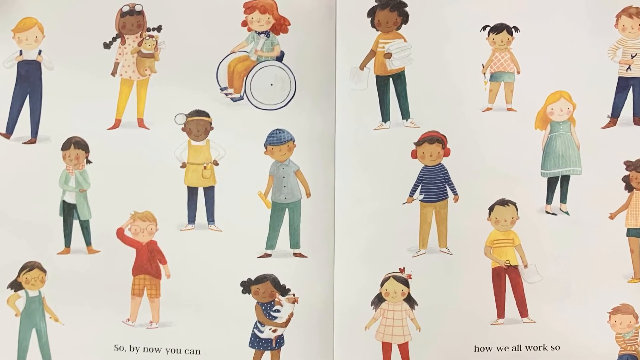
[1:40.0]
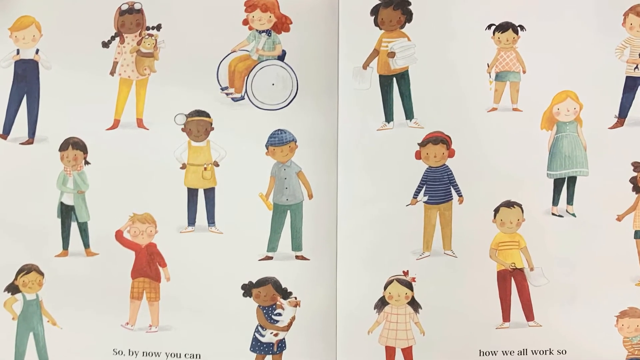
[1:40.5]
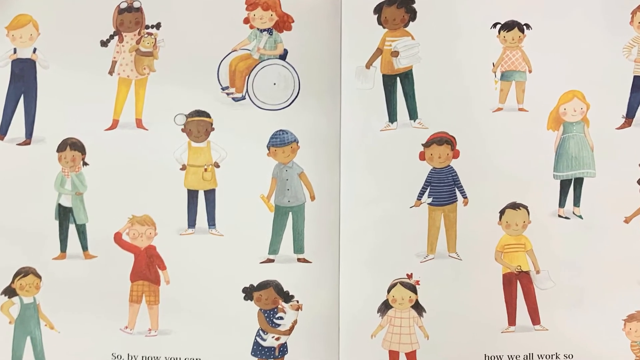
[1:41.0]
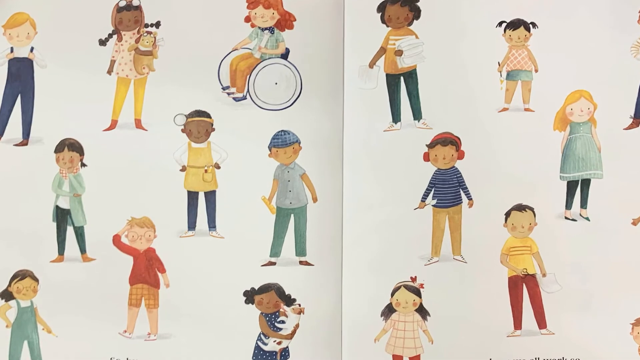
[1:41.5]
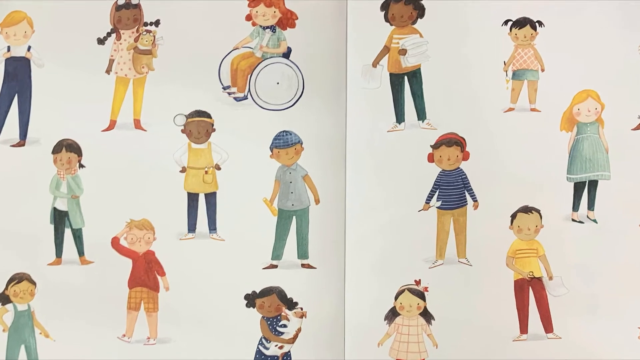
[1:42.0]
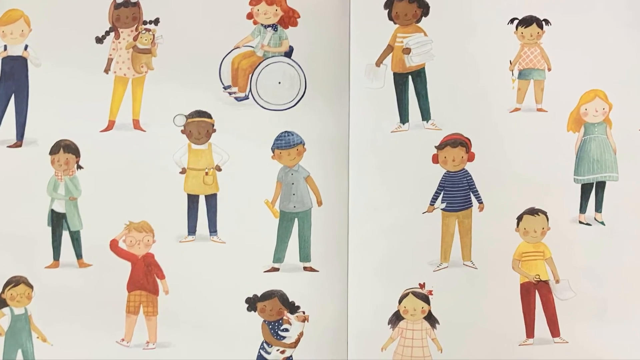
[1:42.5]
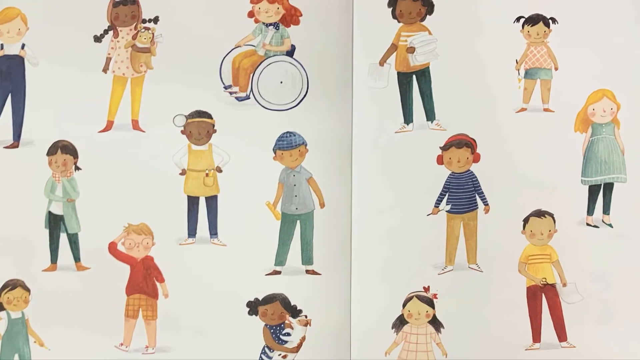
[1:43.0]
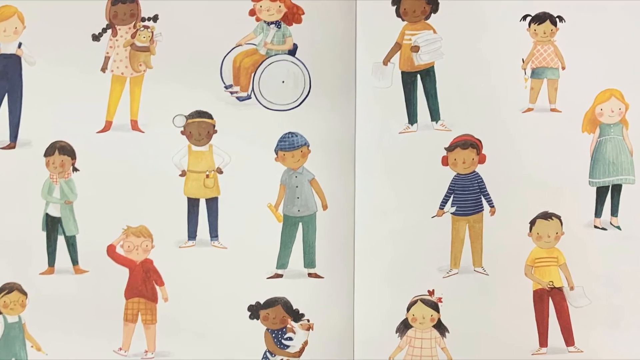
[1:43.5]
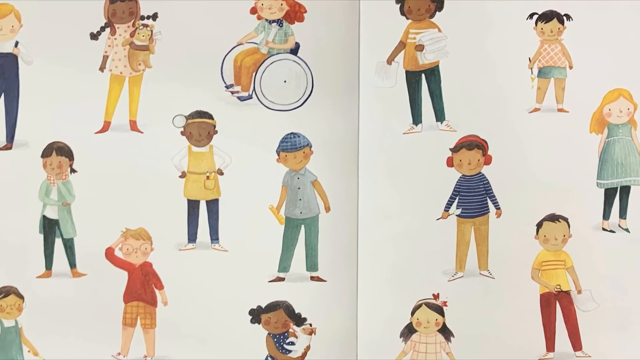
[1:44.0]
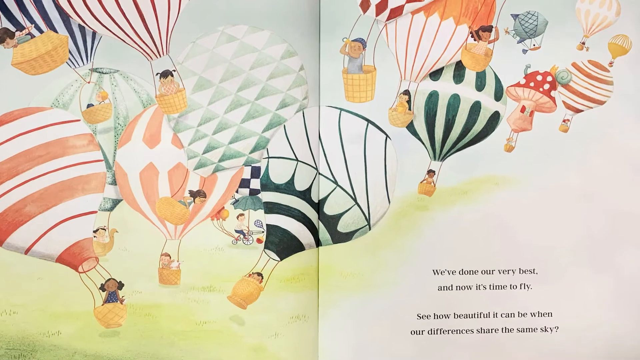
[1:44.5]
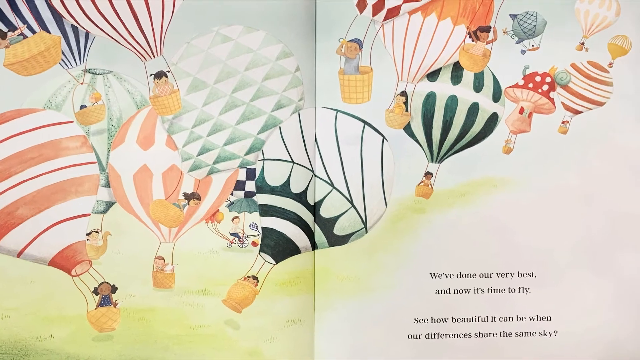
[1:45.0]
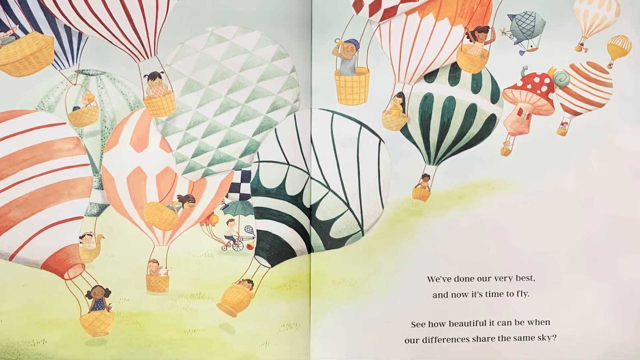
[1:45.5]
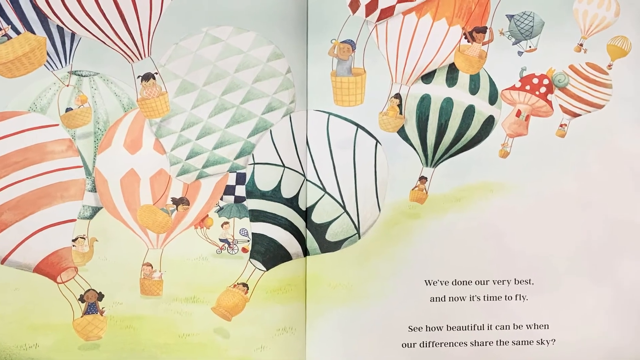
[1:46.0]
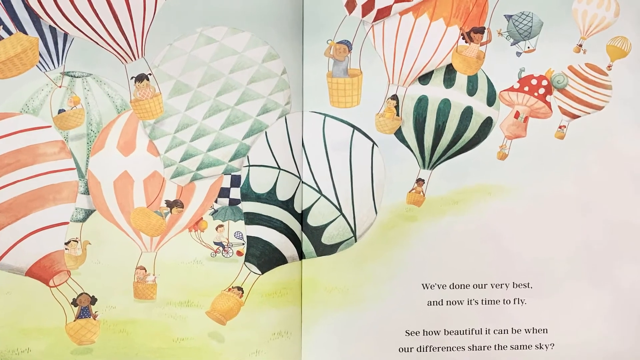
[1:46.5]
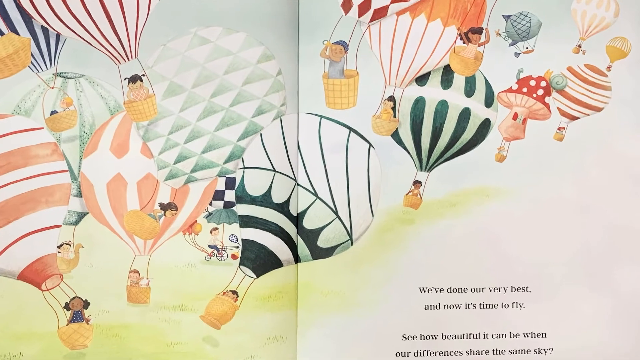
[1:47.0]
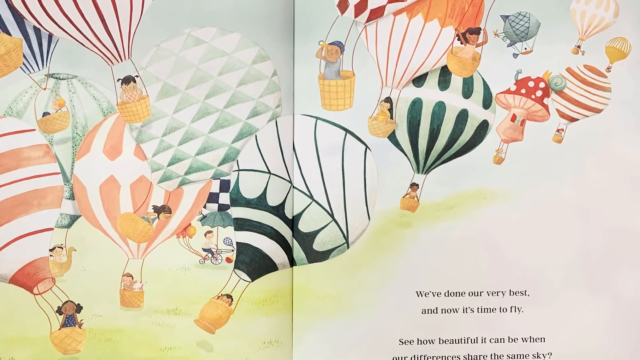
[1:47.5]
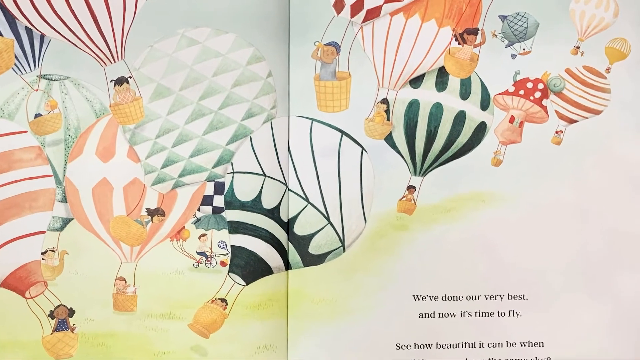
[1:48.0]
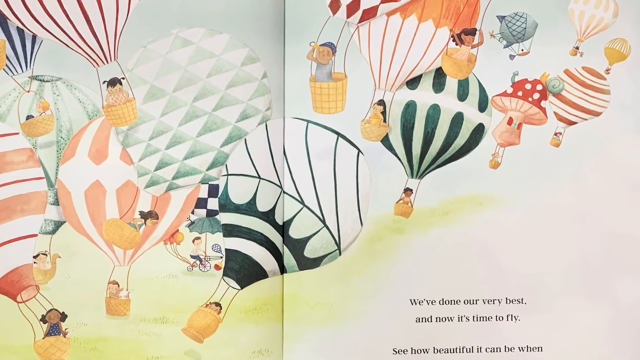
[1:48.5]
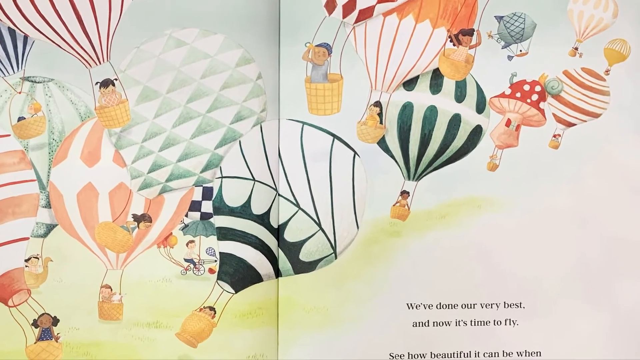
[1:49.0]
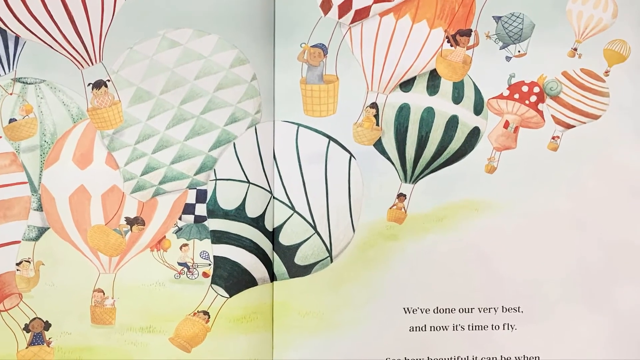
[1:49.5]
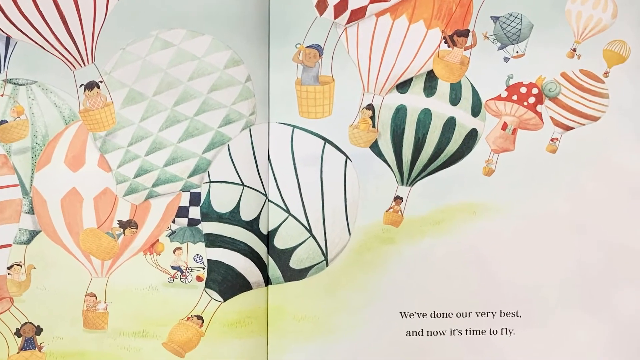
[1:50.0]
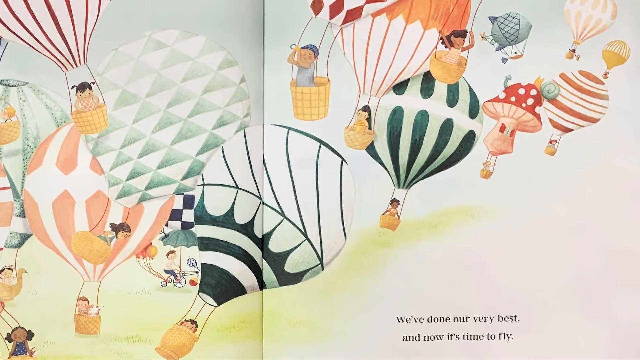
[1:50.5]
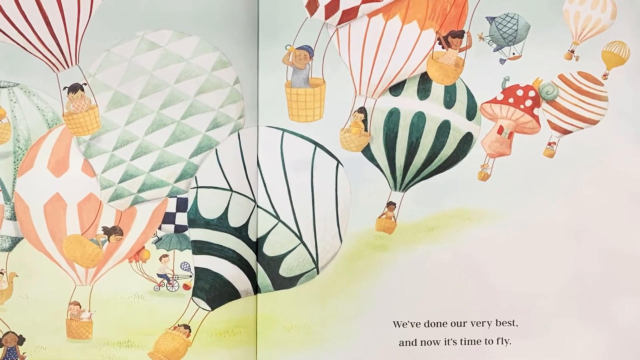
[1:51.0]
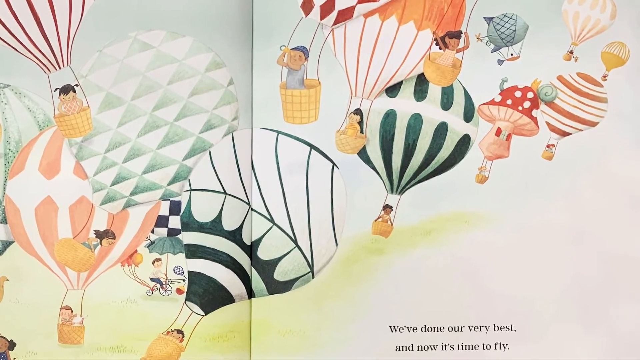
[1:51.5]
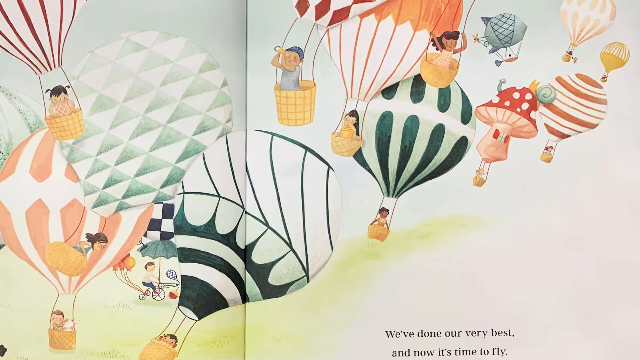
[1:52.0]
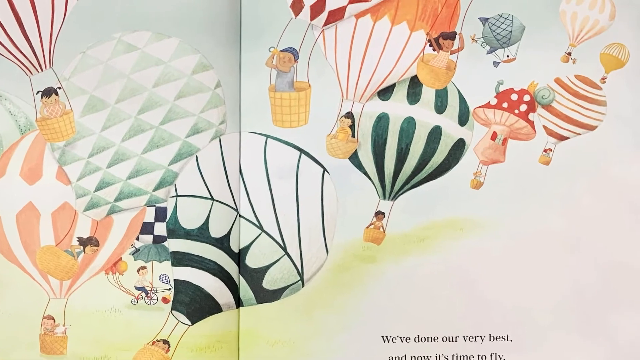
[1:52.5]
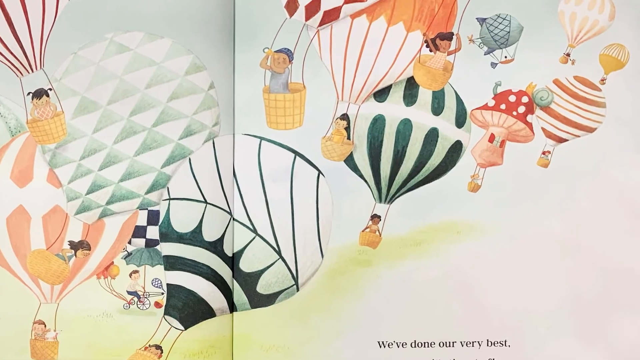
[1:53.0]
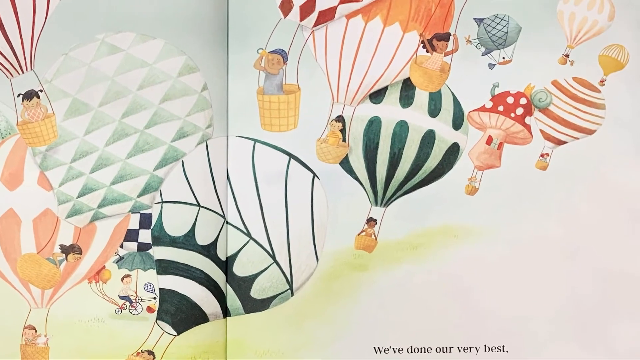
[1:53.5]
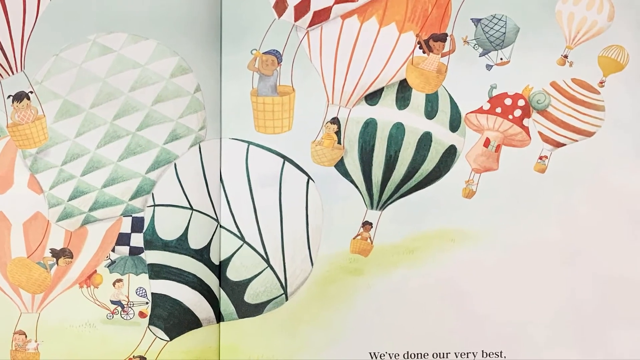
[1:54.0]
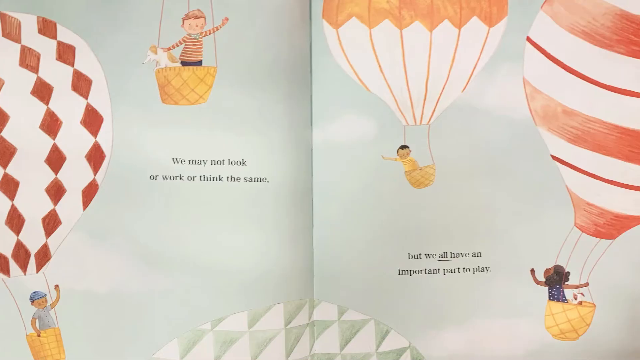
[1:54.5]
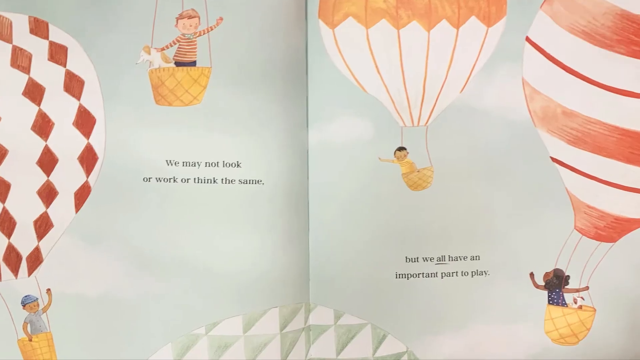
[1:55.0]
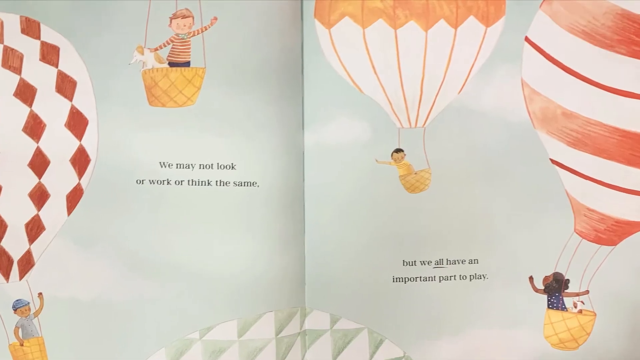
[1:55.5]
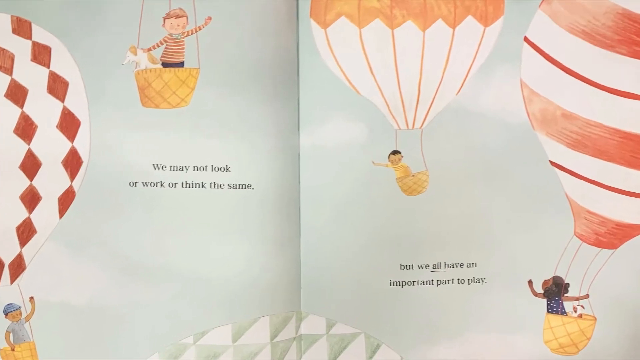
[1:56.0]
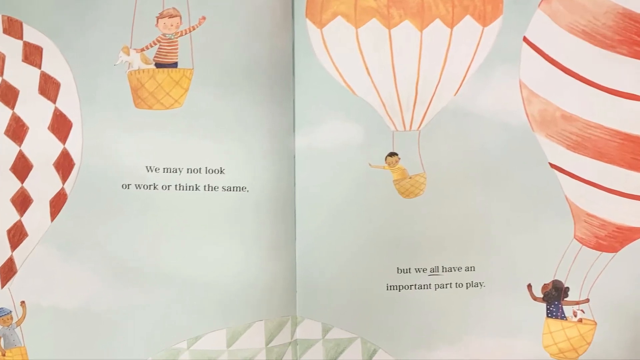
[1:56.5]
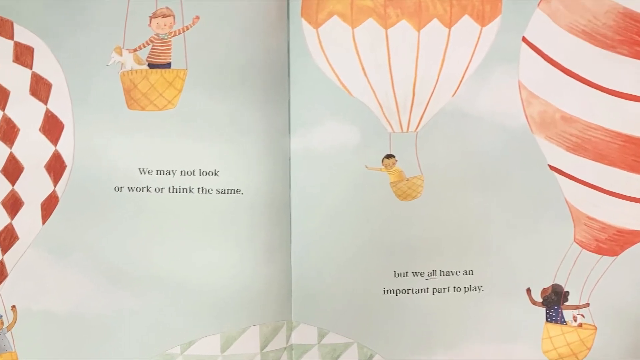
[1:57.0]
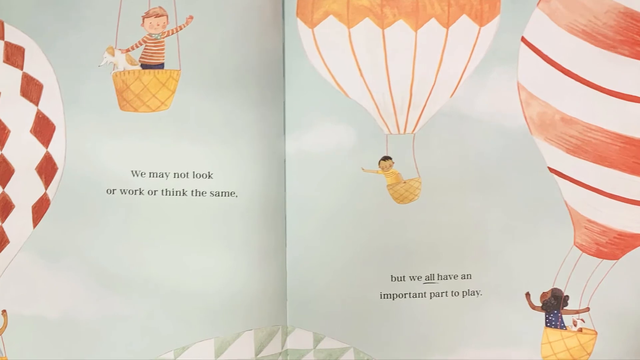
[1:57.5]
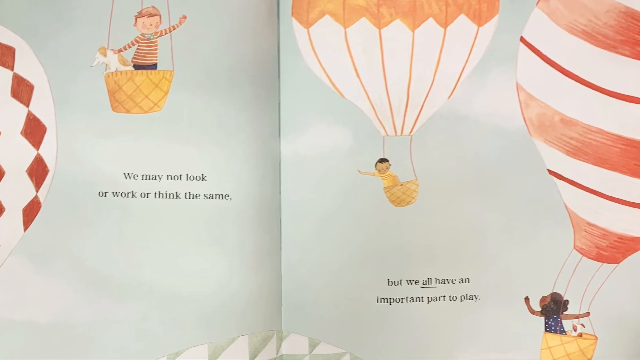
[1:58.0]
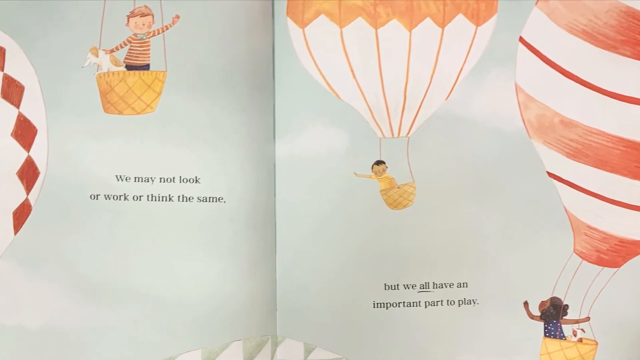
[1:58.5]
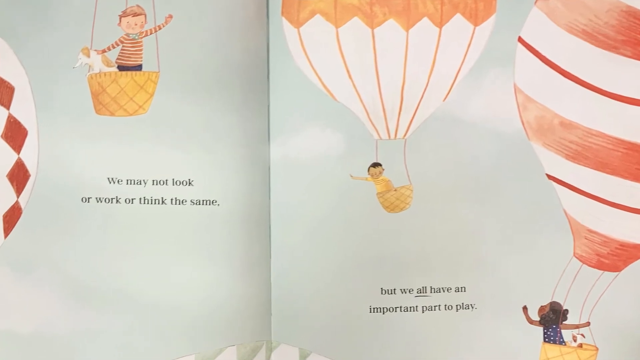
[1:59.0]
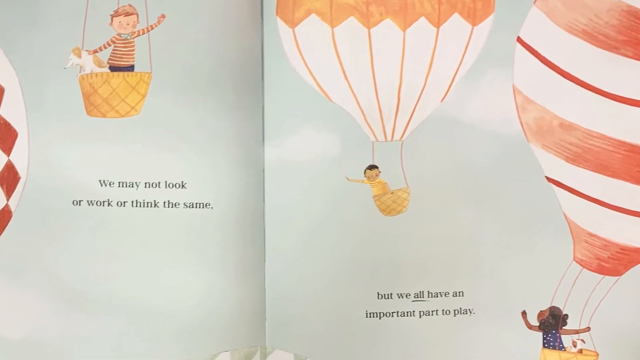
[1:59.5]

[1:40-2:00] The storybook is open on a page with lots of different children across both the left and right pages. One is in a wheelchair and has ginger hair; one is an African-Caribbean child with glasses on top of the head and little pigtails, holding some kind of toy; another child wears dungarees; and a Caucasian boy with blonde hair wears glasses, a red top and yellow shorts. On the right-hand side are many other children of different ethnicities, wearing different clothing: shorts, trousers and dresses. The next page shows lots of hot air balloons in the air with children in them, in different shapes, colours, patterns and geometric prints. Text on the right-hand side says "we've done our very best and now it's time to fly. See how beautiful it can be when", and the rest is not clearly readable. The view zooms in on the different hot air balloons and the children flying them. The next page says on the left-hand side "we may not look or work or think the same", and on the right-hand side the story continues "but we all have an important part to play". Children are in a basket with their dogs, and on the right-hand side other children are in their hot air balloons.